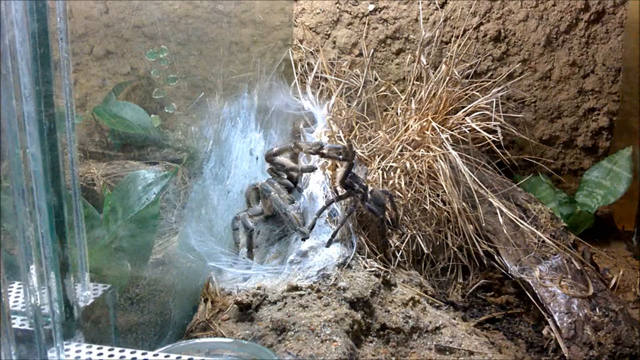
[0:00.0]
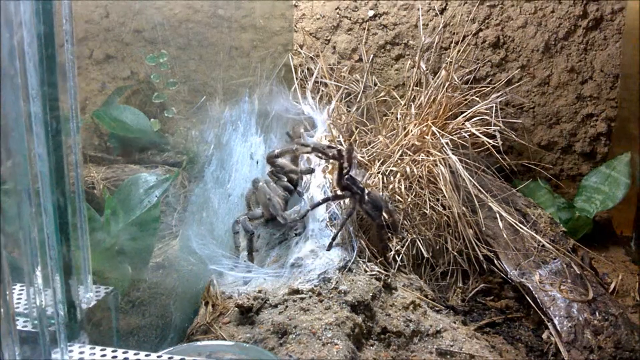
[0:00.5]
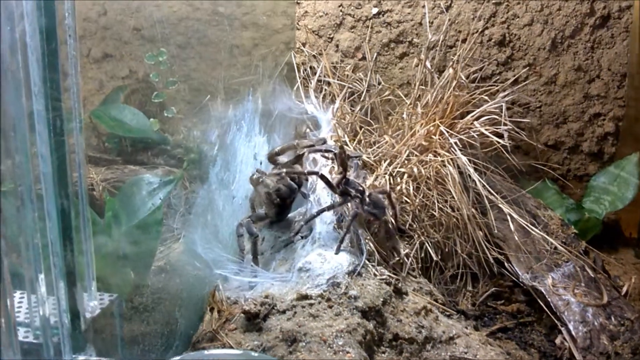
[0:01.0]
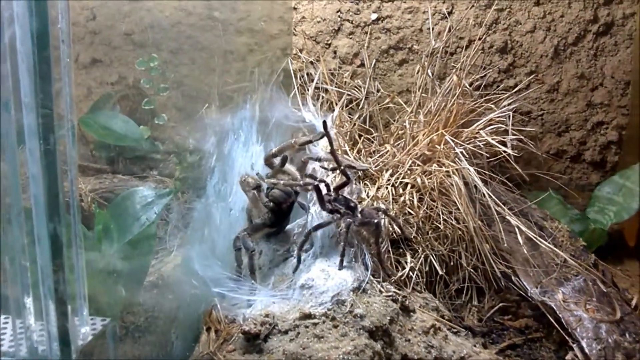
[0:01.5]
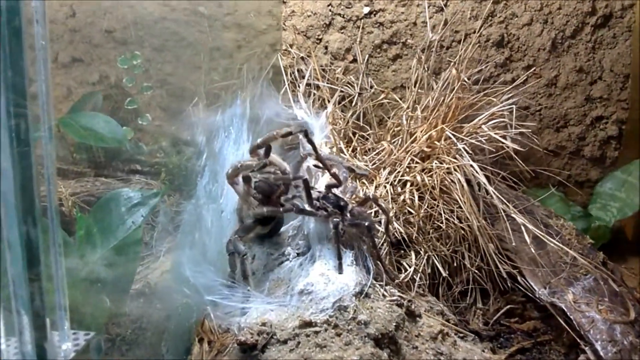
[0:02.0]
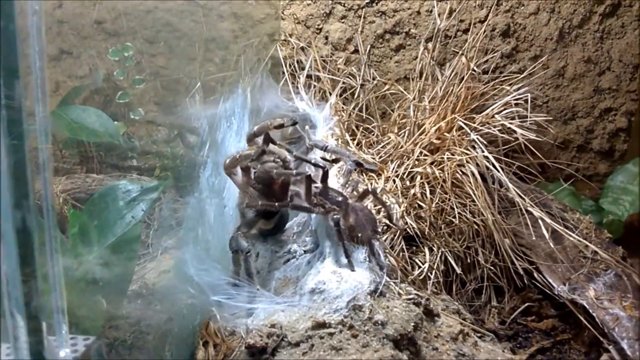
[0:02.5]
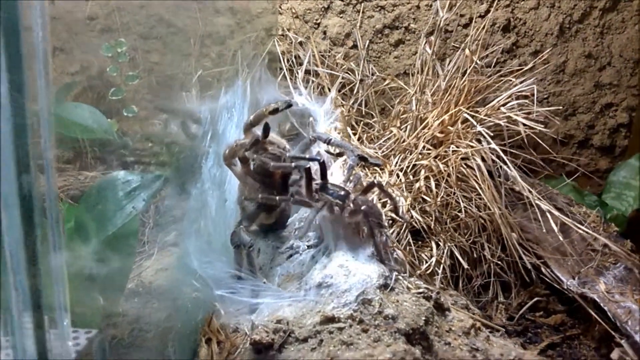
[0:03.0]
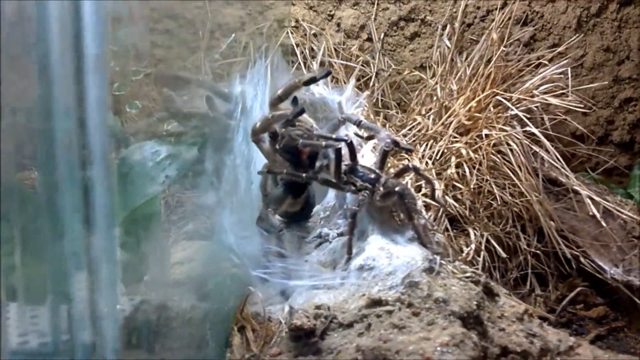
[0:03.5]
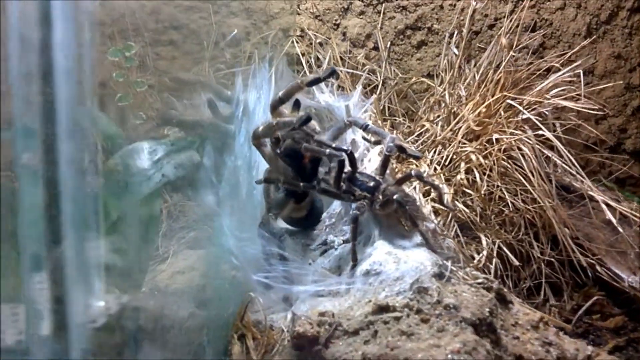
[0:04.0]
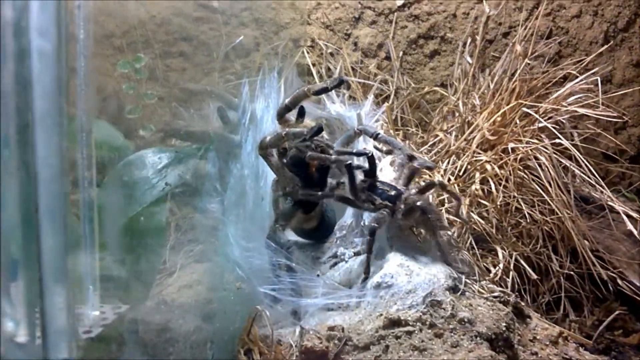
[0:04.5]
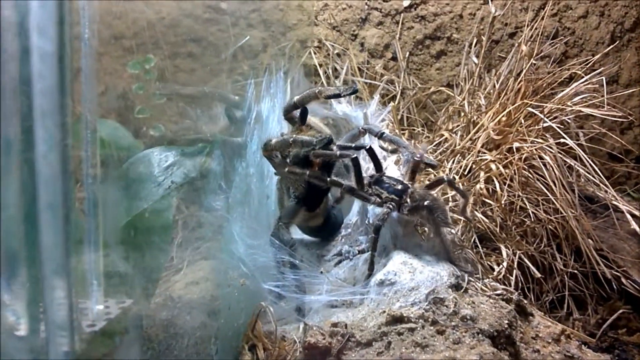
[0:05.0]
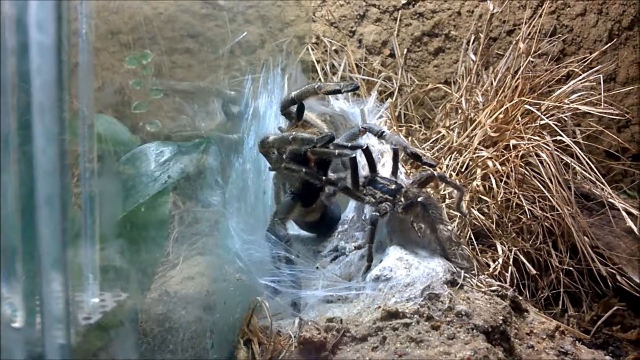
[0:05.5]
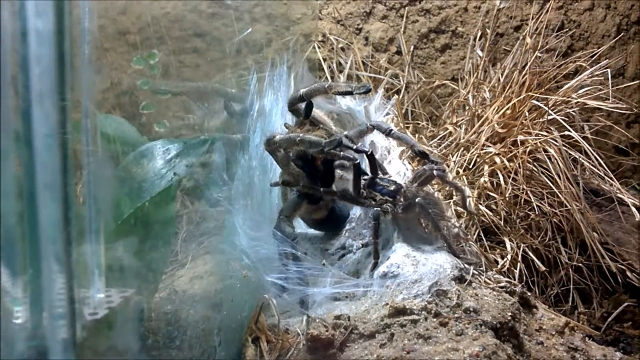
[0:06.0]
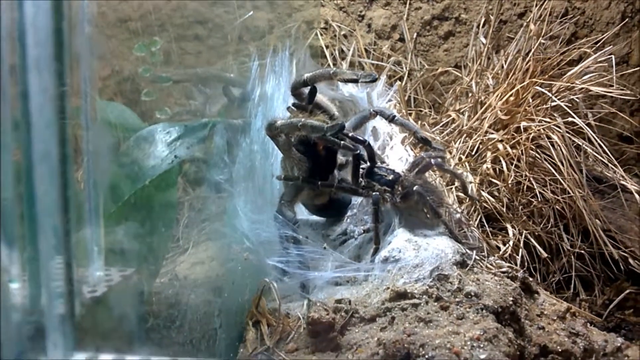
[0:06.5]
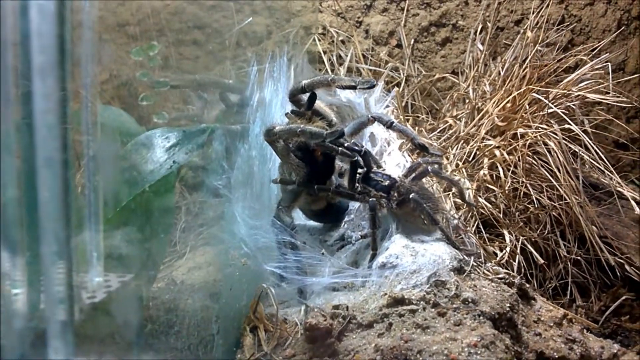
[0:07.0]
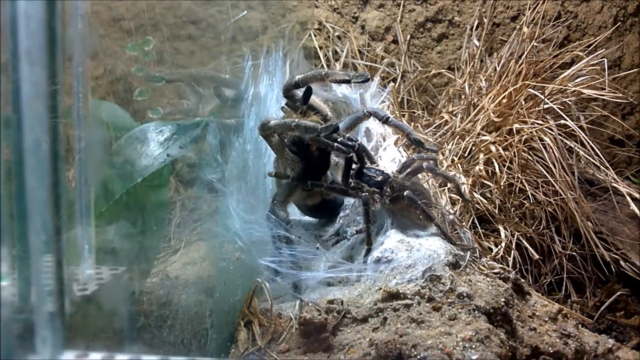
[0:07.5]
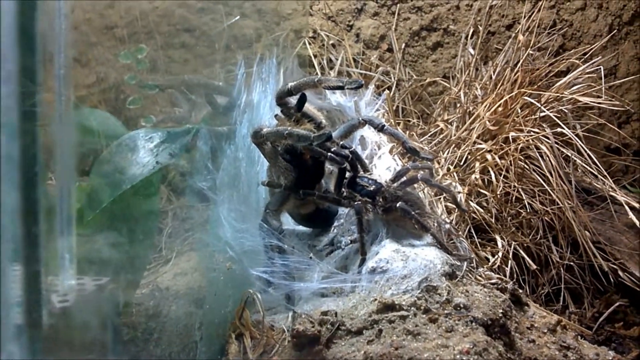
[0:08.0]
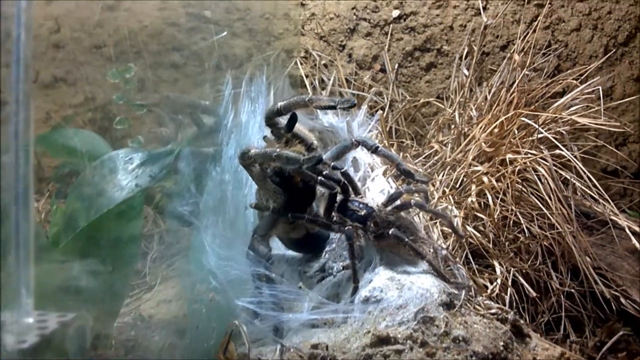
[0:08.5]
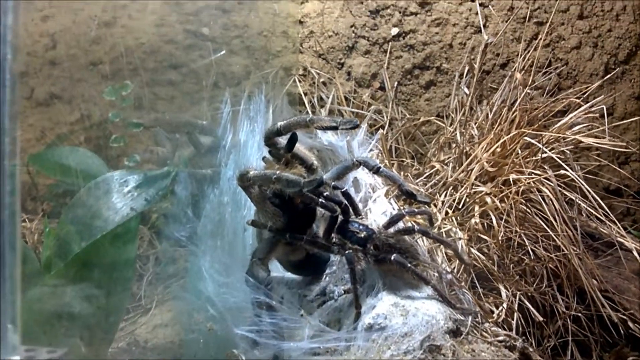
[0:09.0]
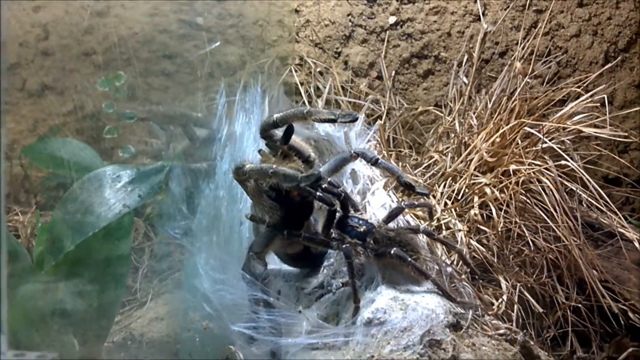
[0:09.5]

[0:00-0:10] The scene appears to be the inside of a terrarium or cage with dirt terrain, where two black tarantulas are present. A larger tarantula on the left is kind of sitting in a large web that is against a glass wall. A somewhat smaller tarantula seems to be pushing or attacking the larger one. The larger tarantula looks to have its back pressed against the glass, while the other spider has its legs pressed up against the larger one's lower body. The spiders appear to be fighting.